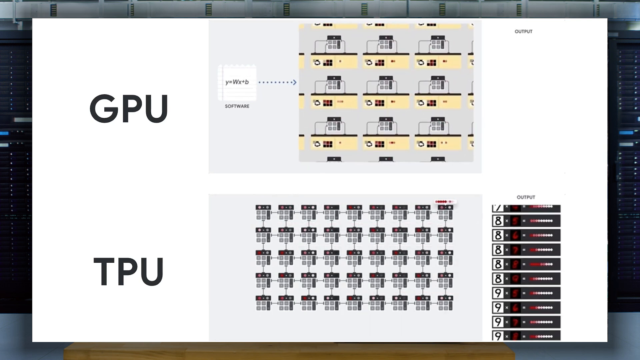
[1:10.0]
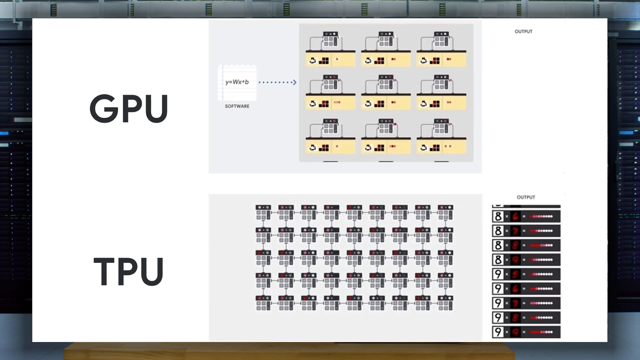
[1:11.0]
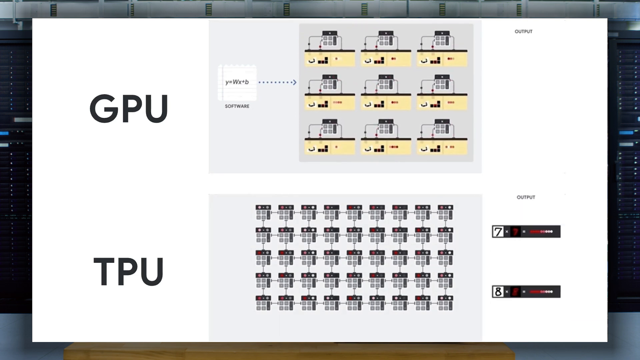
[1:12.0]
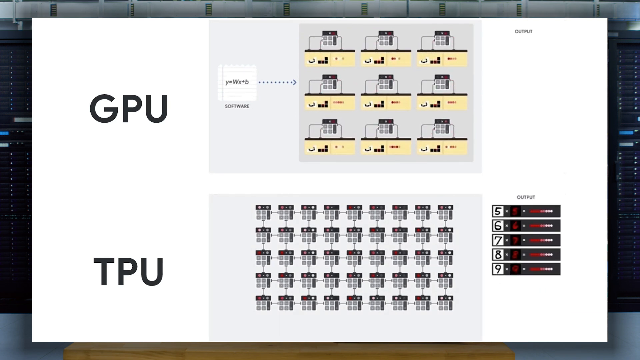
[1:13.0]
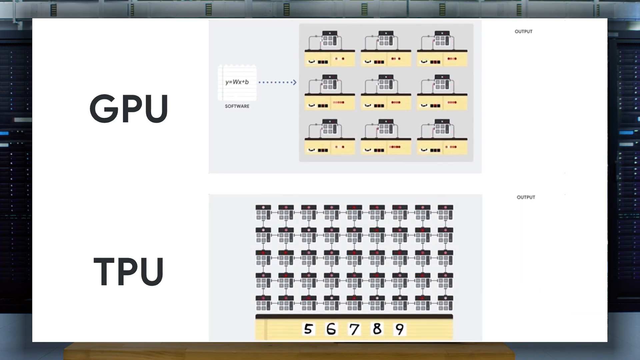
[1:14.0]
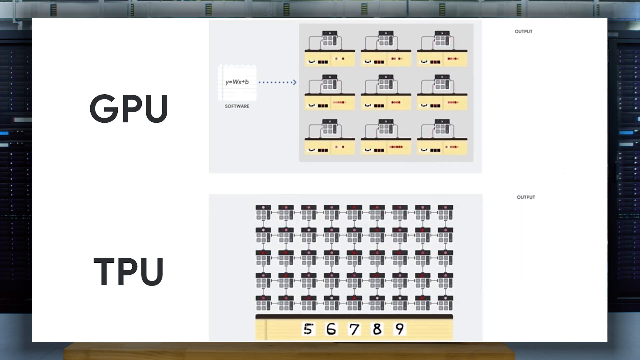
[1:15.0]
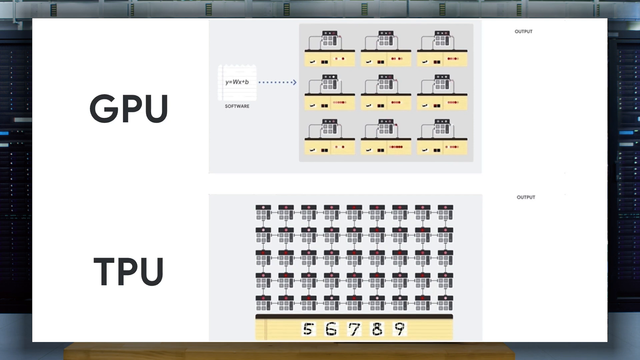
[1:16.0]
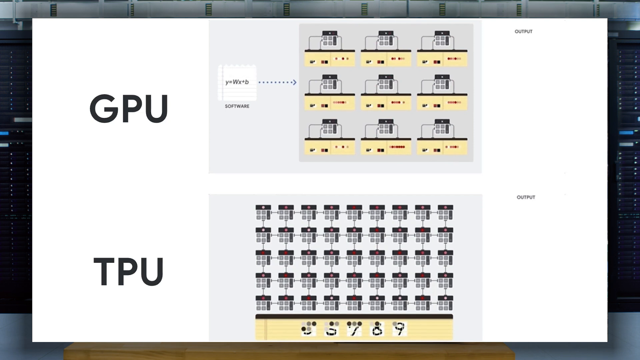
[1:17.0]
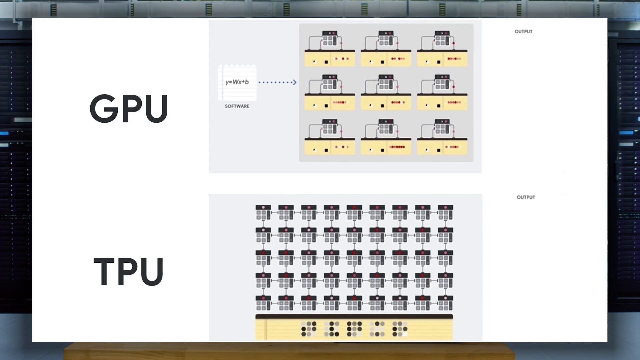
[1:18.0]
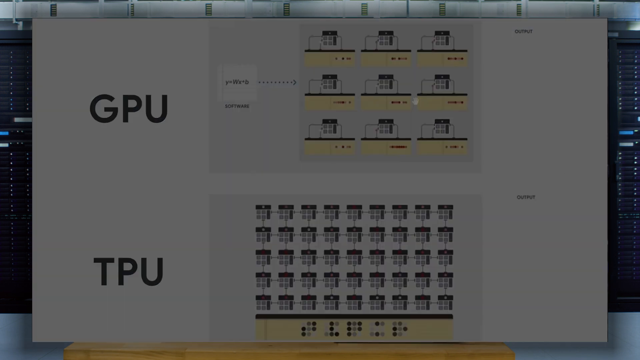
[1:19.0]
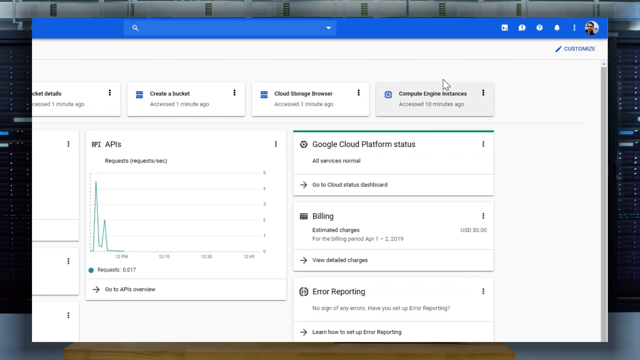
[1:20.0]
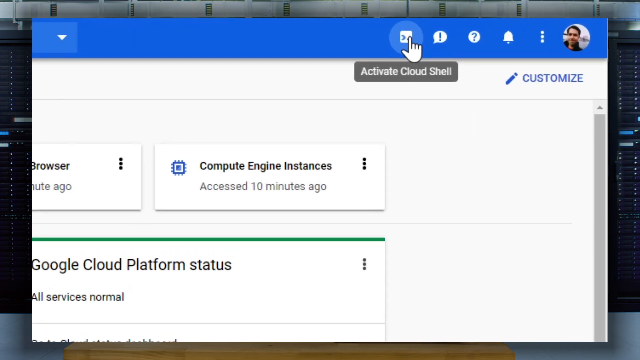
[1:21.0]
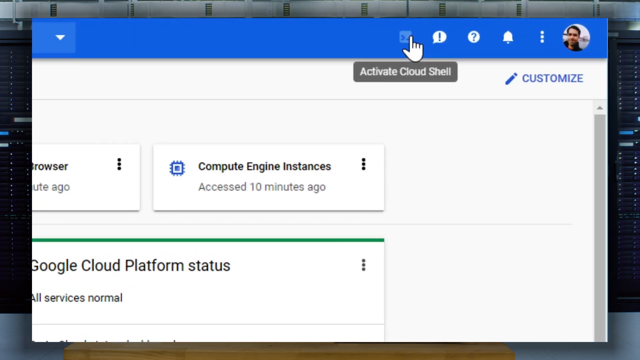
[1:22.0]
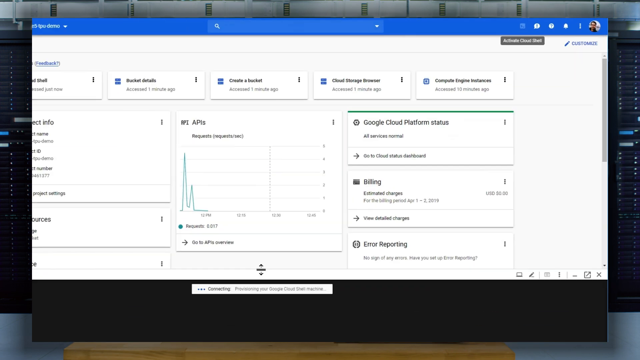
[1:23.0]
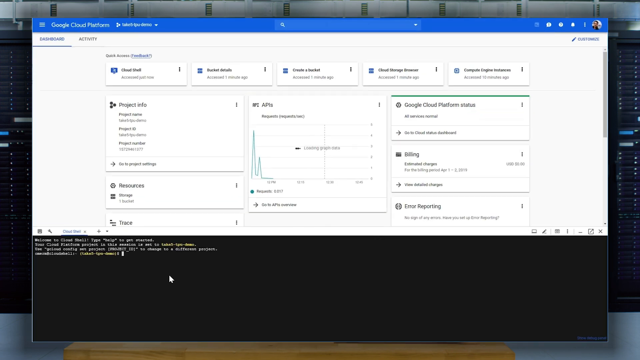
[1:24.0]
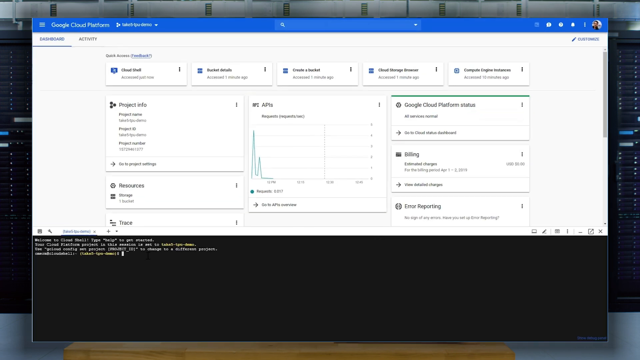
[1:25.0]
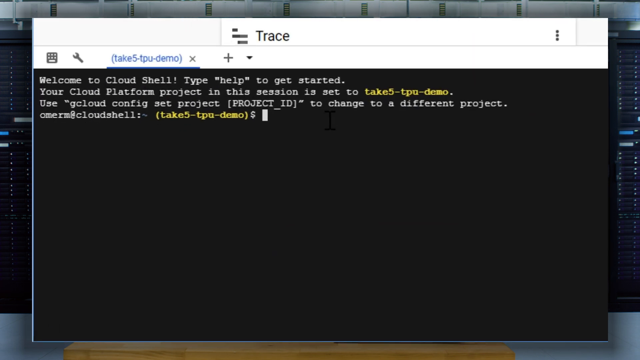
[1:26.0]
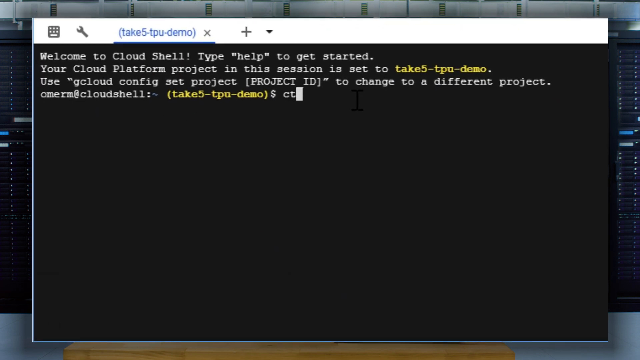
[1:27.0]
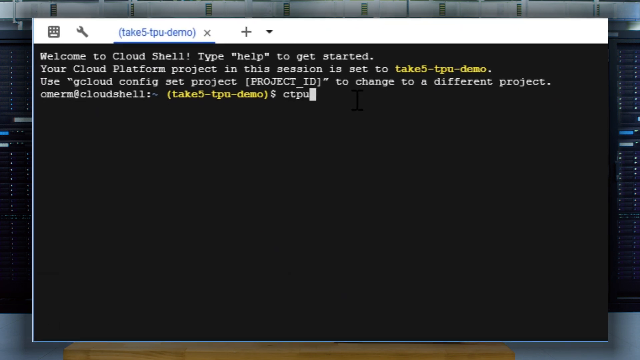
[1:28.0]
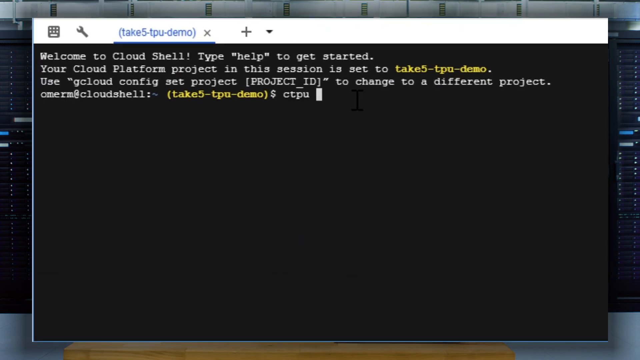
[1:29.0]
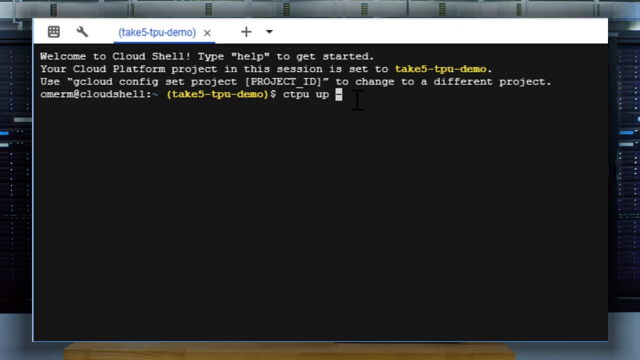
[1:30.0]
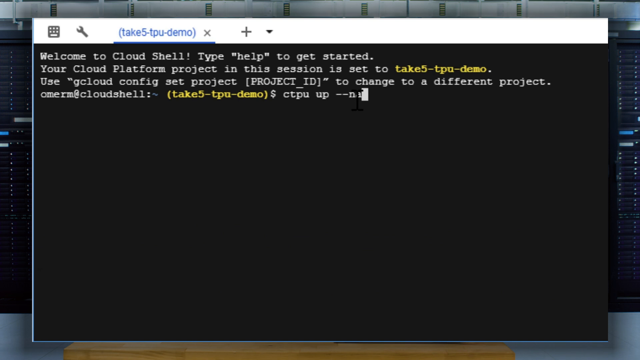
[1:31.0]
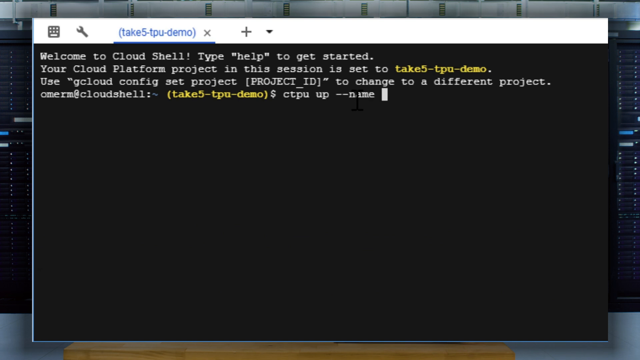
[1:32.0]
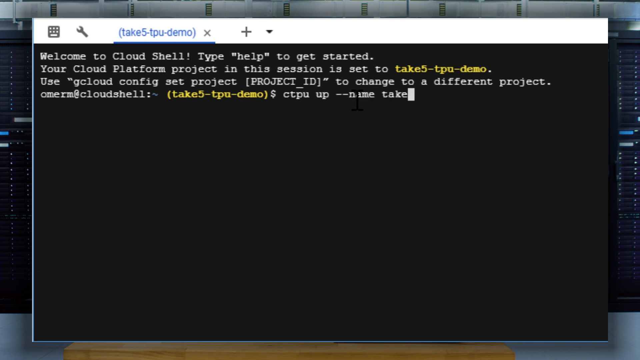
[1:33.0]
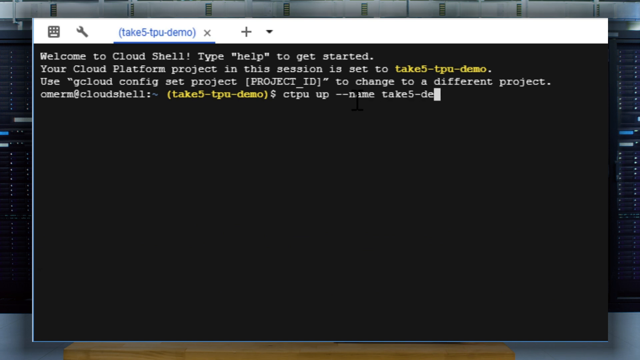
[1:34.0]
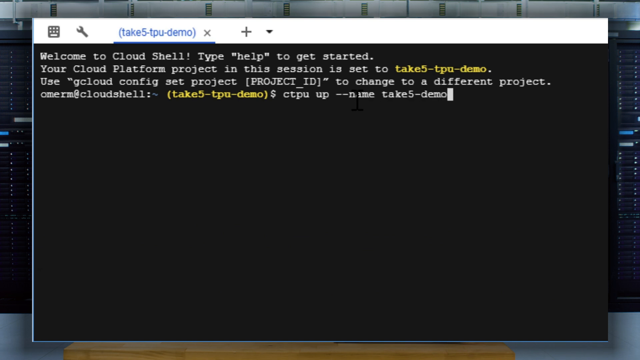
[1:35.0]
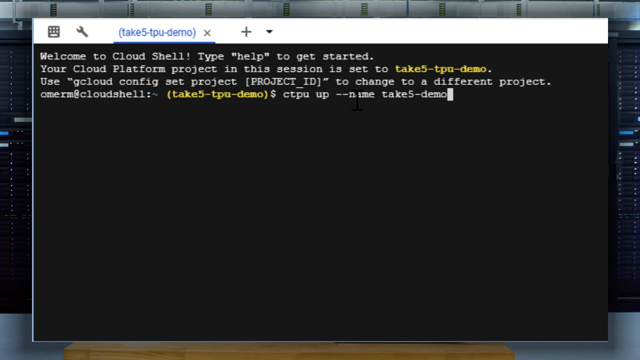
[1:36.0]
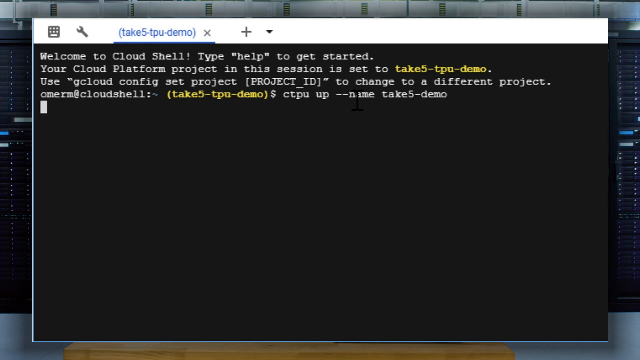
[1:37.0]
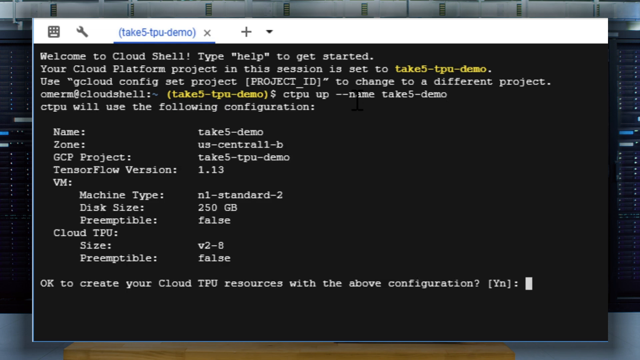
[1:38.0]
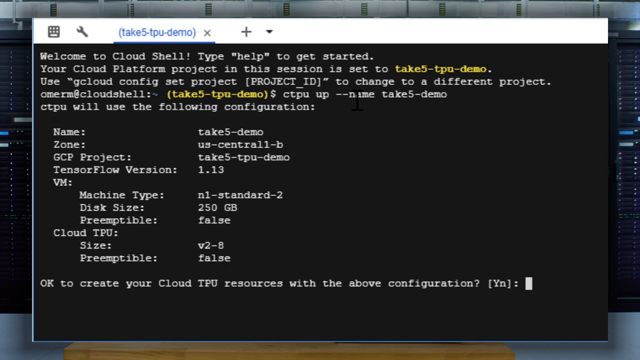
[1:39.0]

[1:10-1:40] The GPU and TPU processes continue, apparently interpreting numbers. The GPU view has to be zoomed in and out to see its multiple units, while the TPU seems to operate with its units, which seem to be many more, all in view. The view then clicks out, and the person goes to "activate cloud shell" in the upper right-hand corner of the work area, which brings up a black workspace for typing code. They start typing code into this box, which is labeled "take 5 TPU demo," with various icons at the top. The text "welcome to cloud shell. Type help to get started" appears. The person enters information, bringing up rows of other information that seem to possibly refer to identification properties.